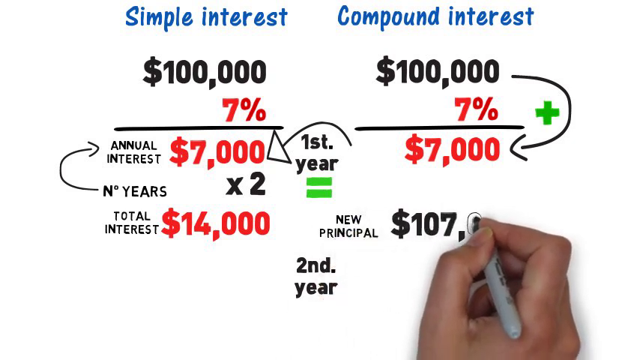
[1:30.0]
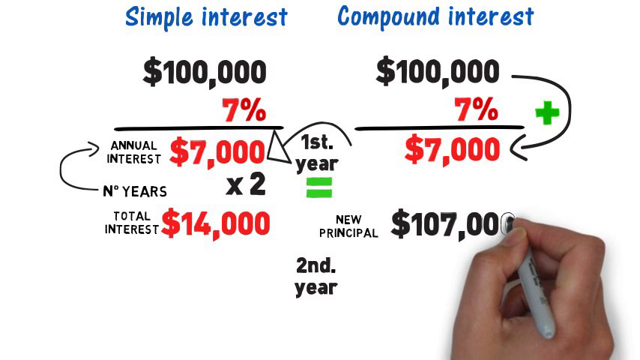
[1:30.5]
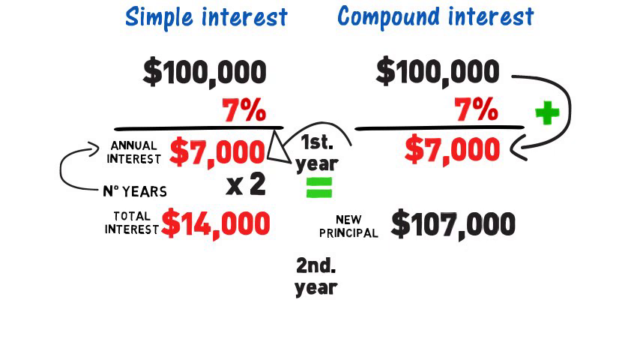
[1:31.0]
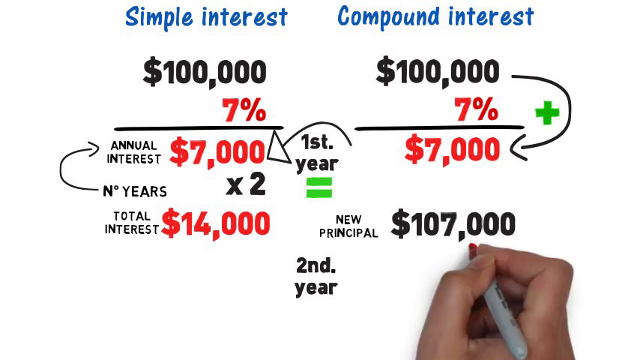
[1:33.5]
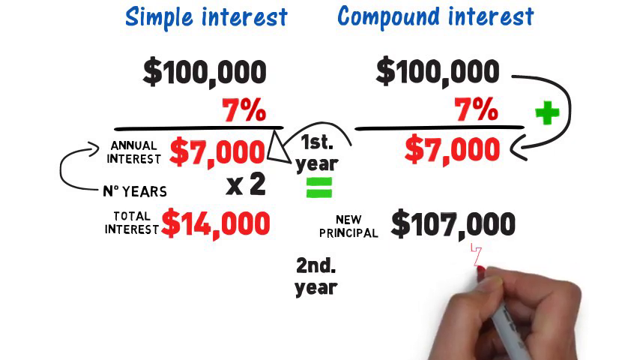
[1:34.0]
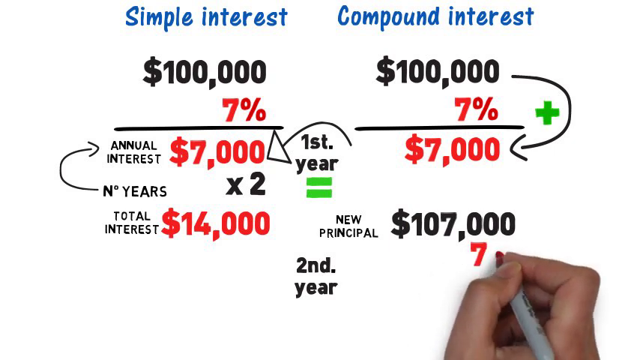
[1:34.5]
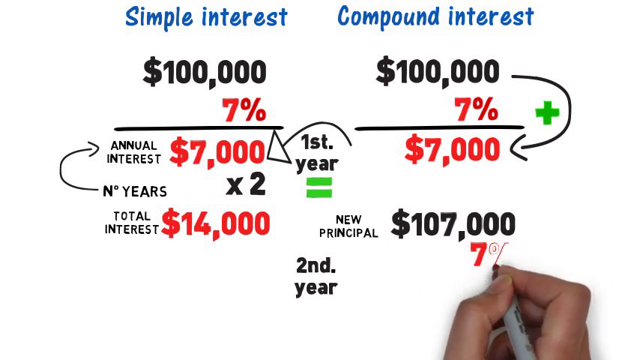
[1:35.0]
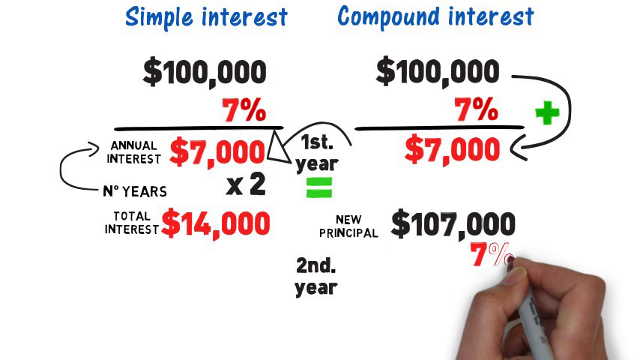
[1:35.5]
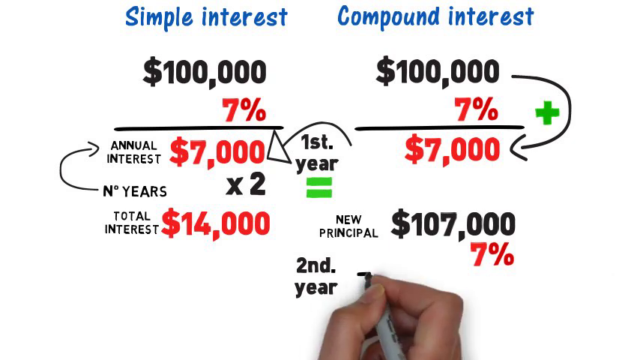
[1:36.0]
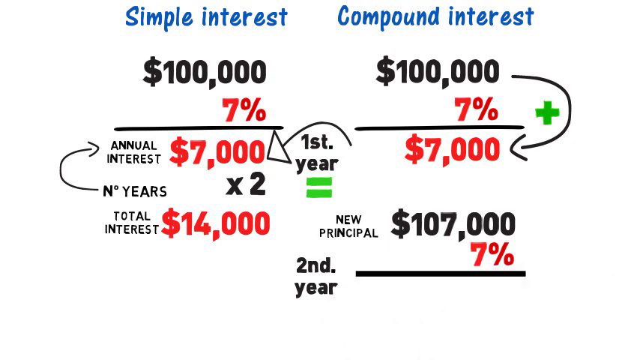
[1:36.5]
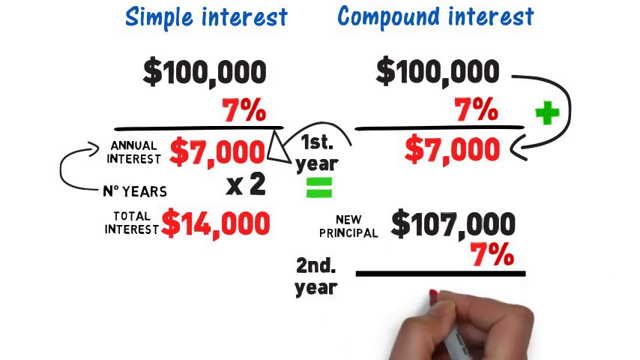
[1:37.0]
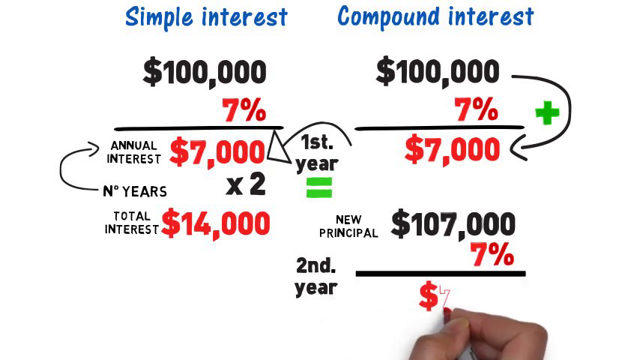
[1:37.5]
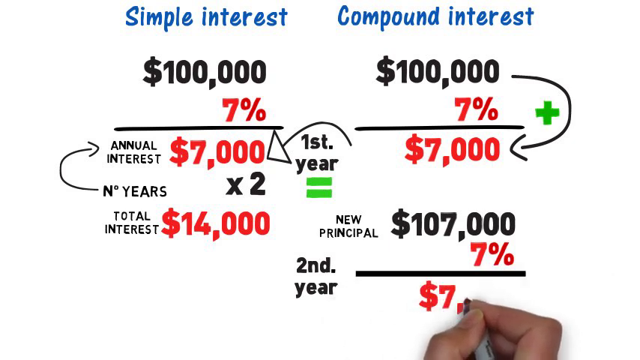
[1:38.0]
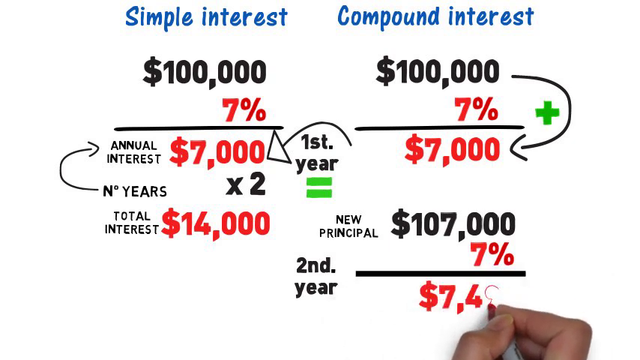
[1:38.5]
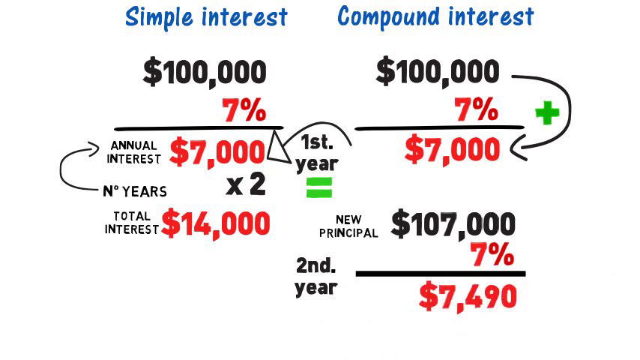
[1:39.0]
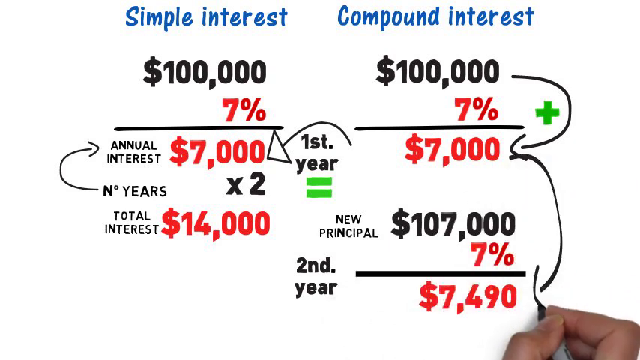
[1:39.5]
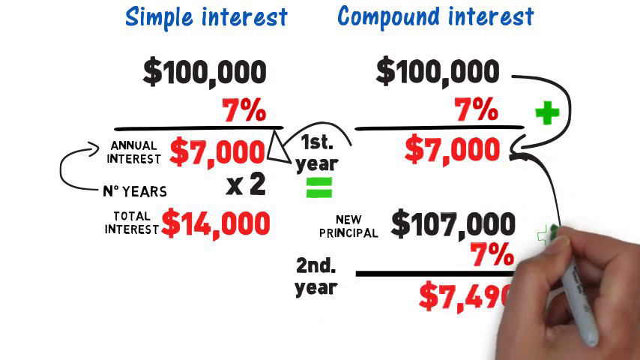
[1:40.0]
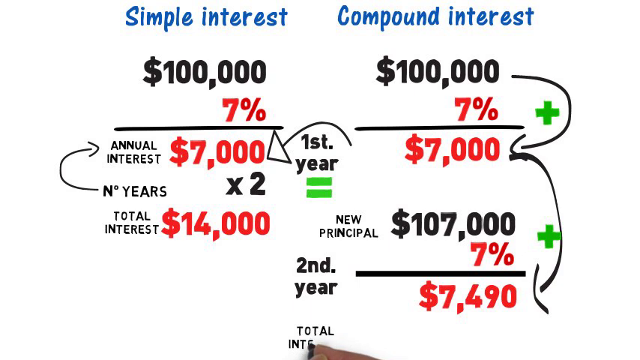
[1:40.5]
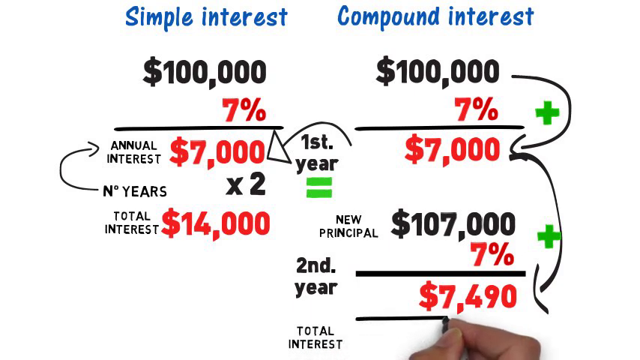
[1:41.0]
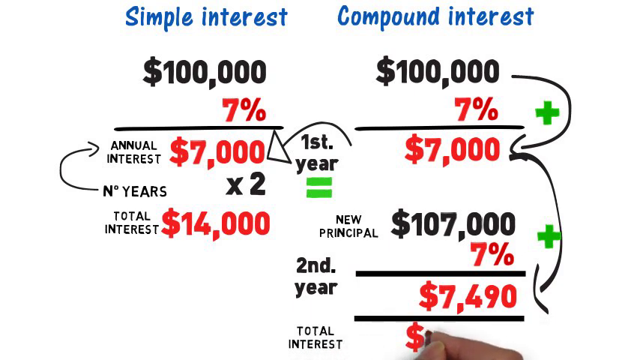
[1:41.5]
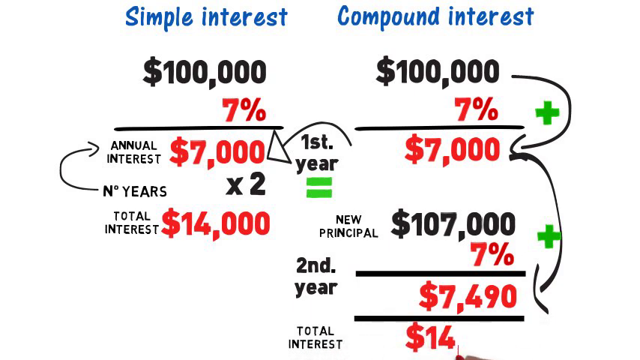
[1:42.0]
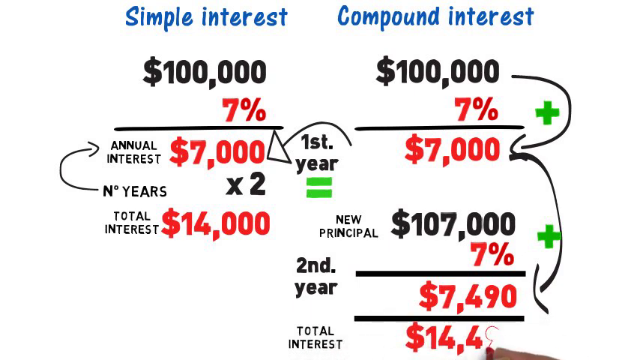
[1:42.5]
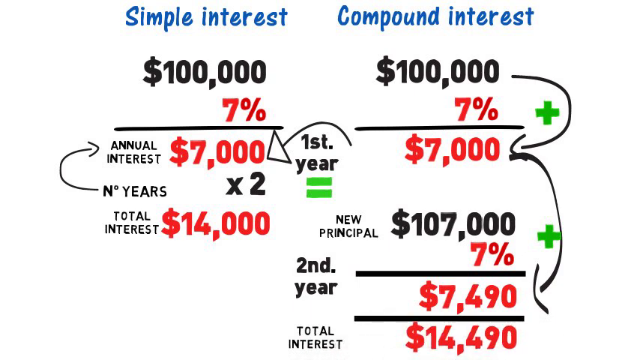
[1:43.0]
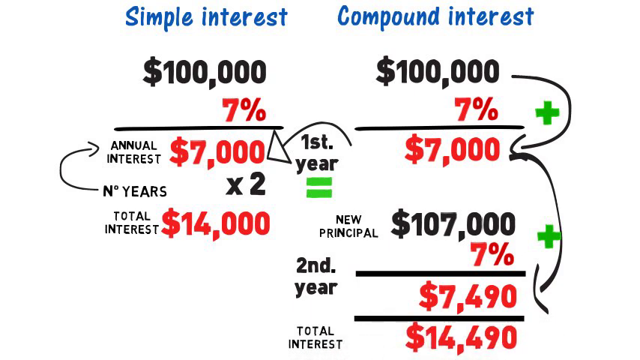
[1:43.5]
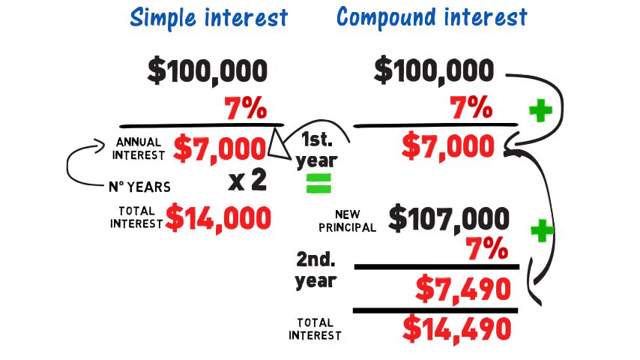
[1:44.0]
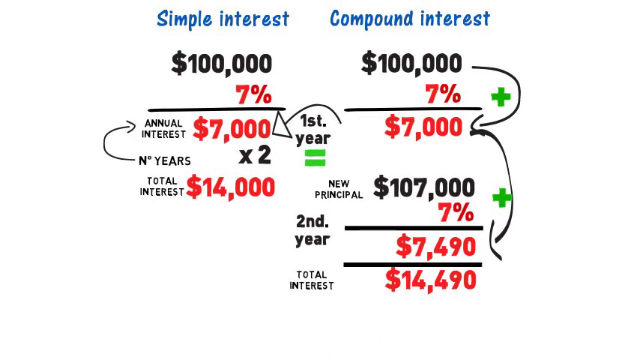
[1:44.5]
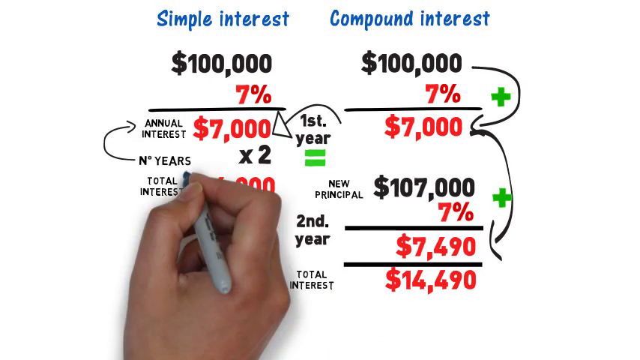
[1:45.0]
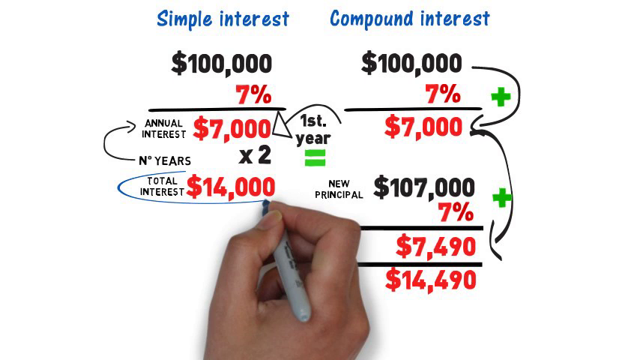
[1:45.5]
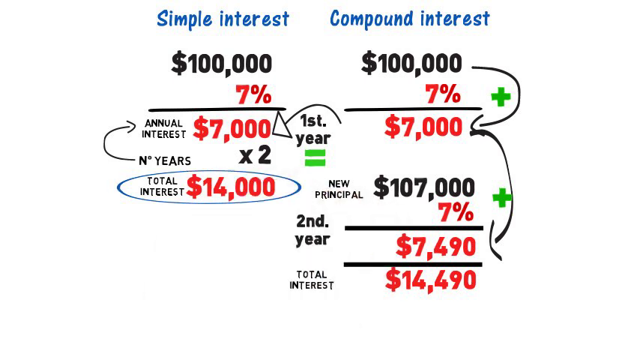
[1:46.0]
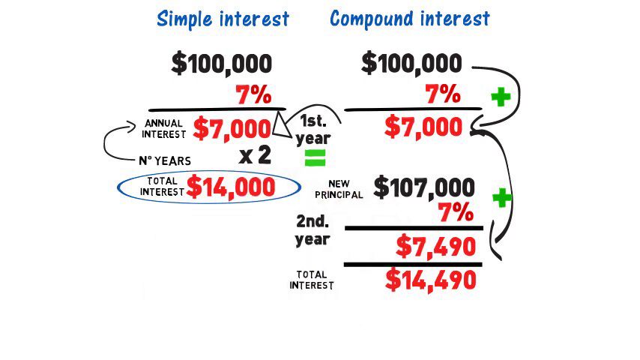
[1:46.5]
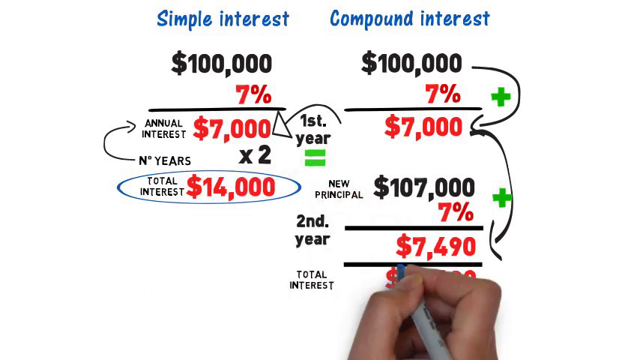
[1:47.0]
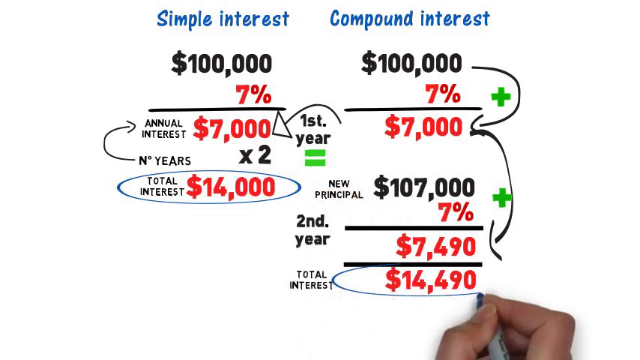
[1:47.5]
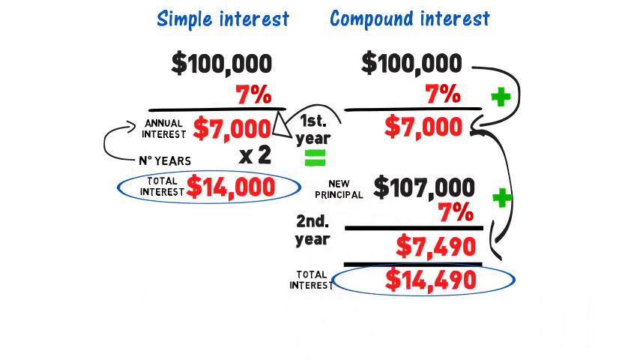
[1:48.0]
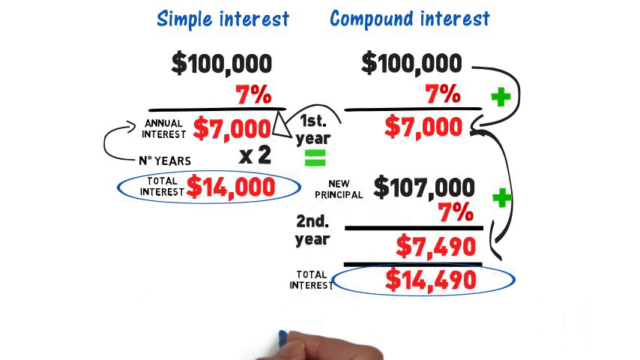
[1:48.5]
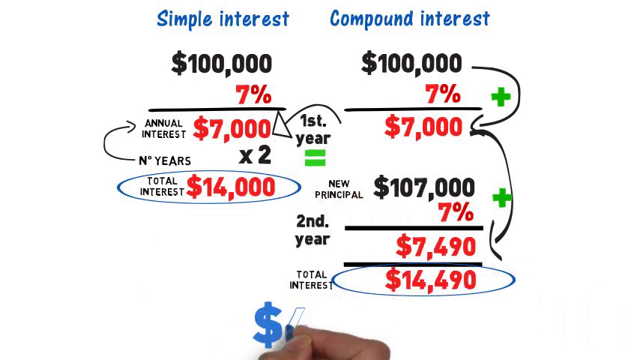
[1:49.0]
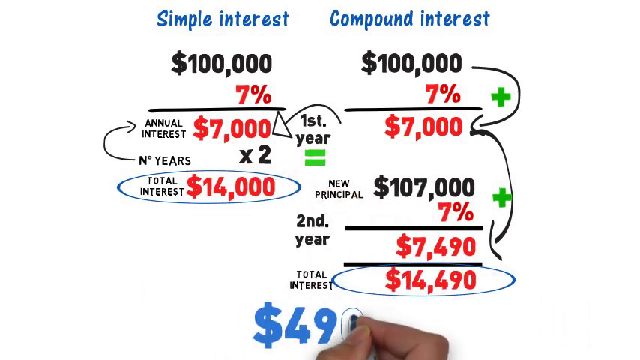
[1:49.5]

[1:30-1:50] The hand continues the formula in the "Compound Interest" column: just to the right of the "New Principal" text, the amount $107,000 is written. The hand multiplies $107,000 by 7%, and the result is $7,490, giving a total interest of $14,490. The hand then circles in blue the $14,000 total from the simple interest column.